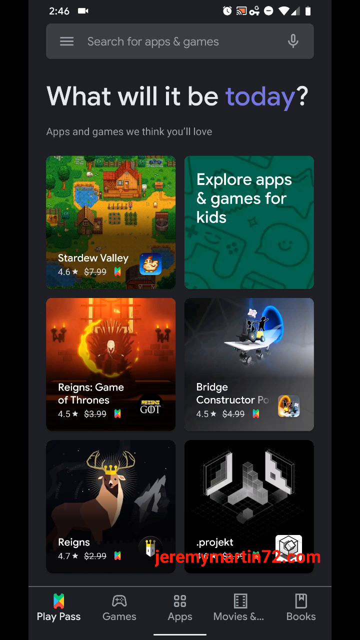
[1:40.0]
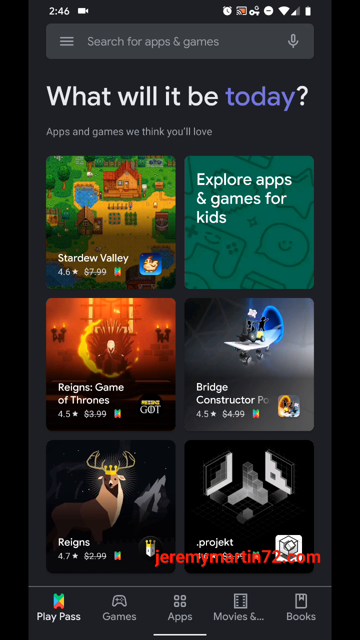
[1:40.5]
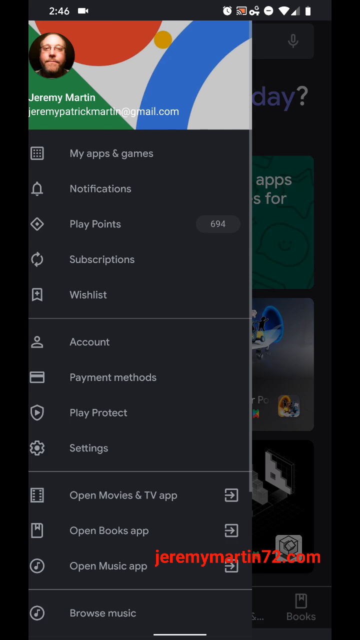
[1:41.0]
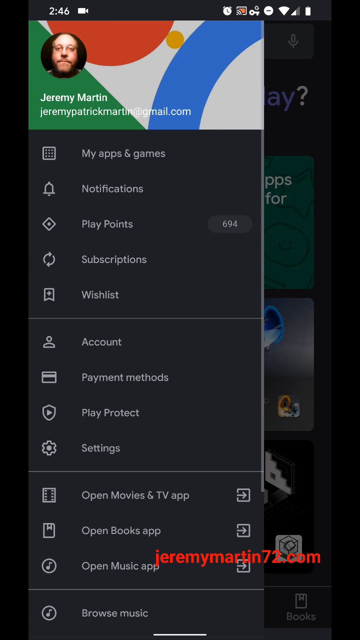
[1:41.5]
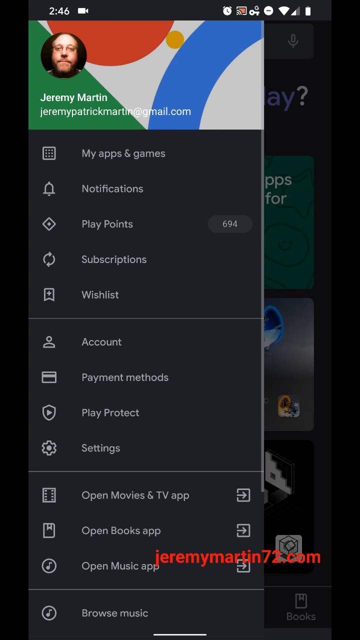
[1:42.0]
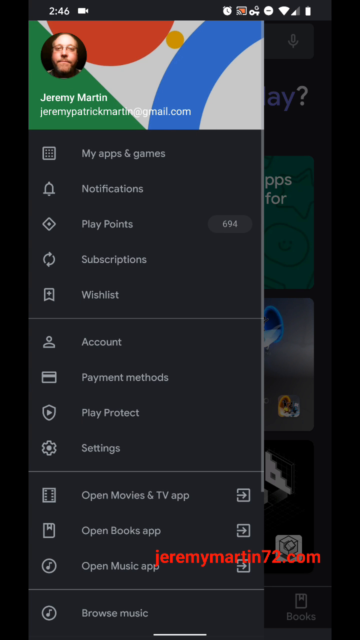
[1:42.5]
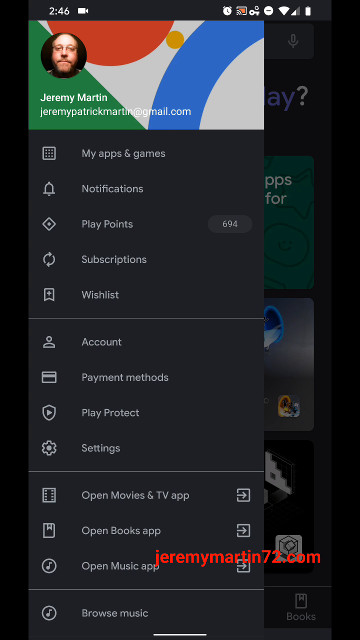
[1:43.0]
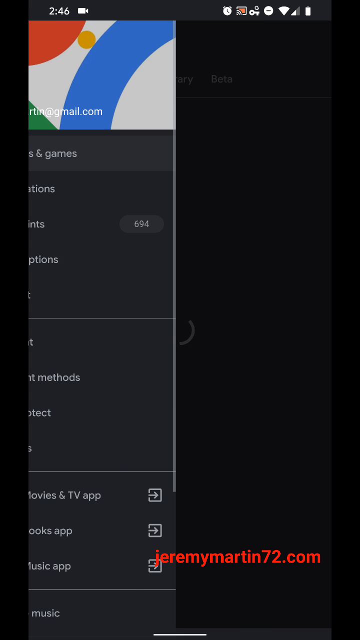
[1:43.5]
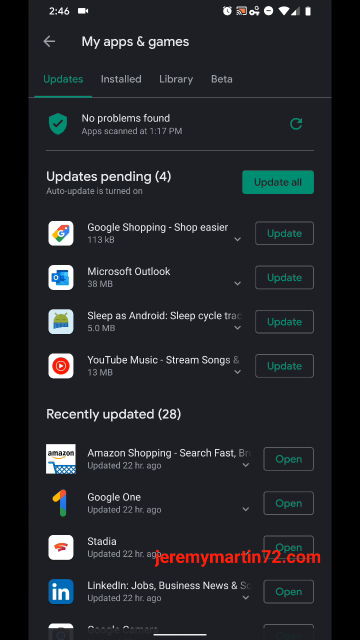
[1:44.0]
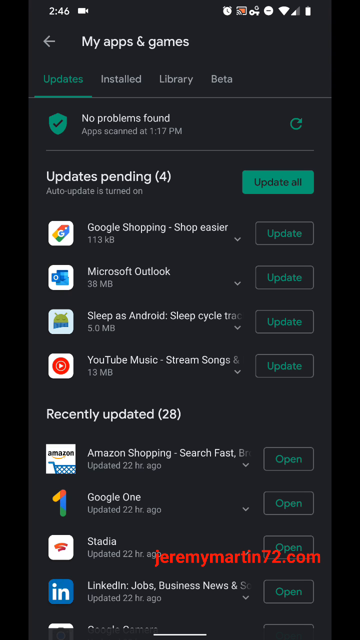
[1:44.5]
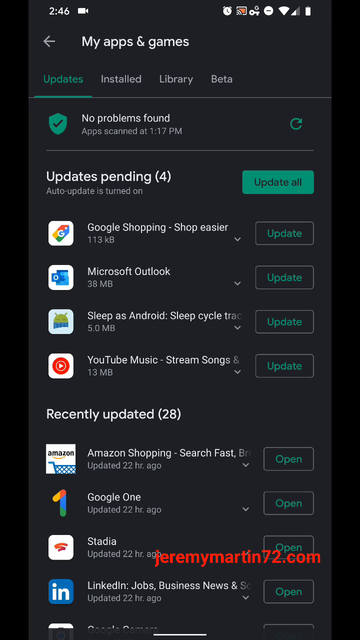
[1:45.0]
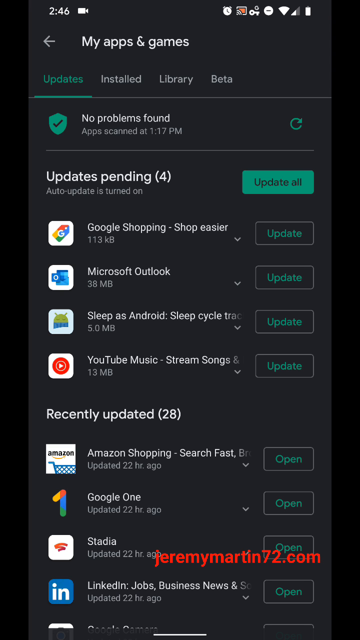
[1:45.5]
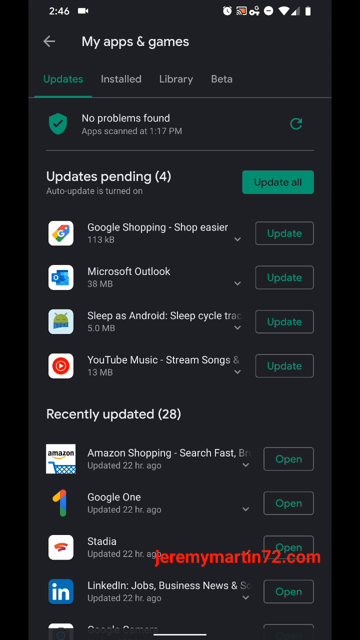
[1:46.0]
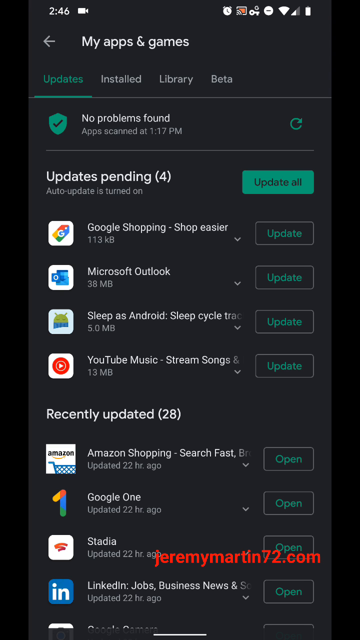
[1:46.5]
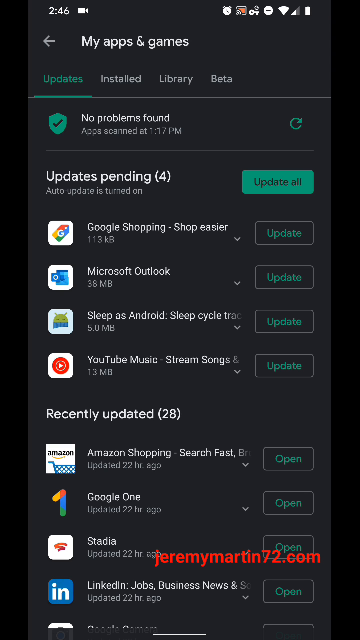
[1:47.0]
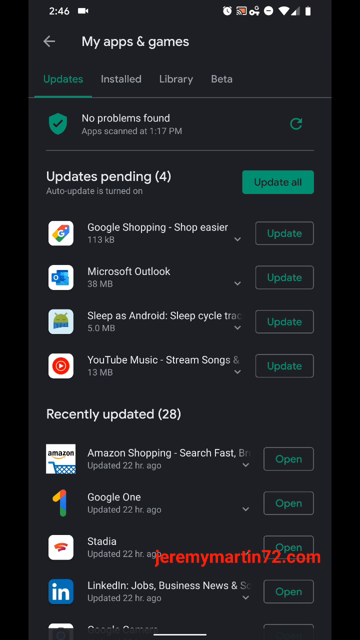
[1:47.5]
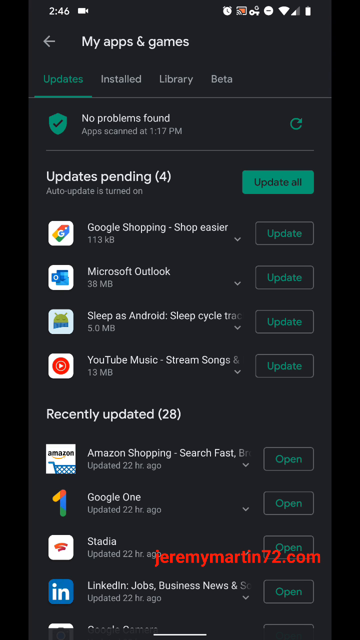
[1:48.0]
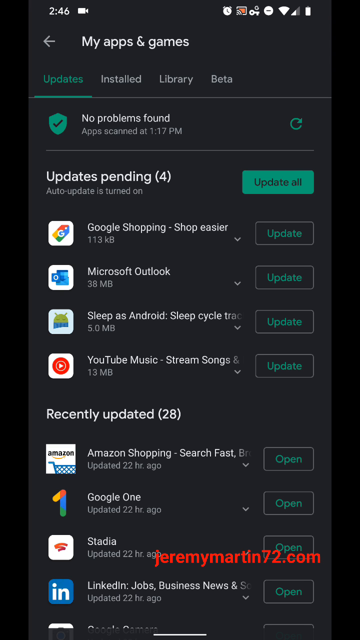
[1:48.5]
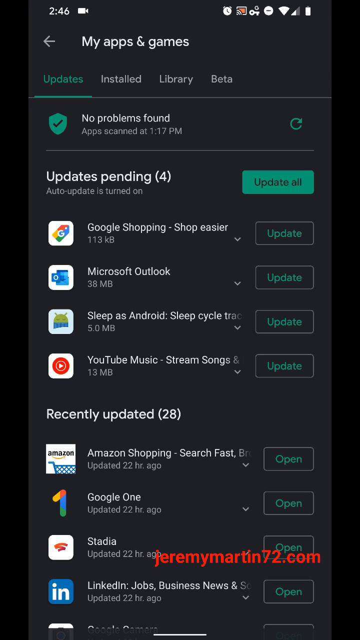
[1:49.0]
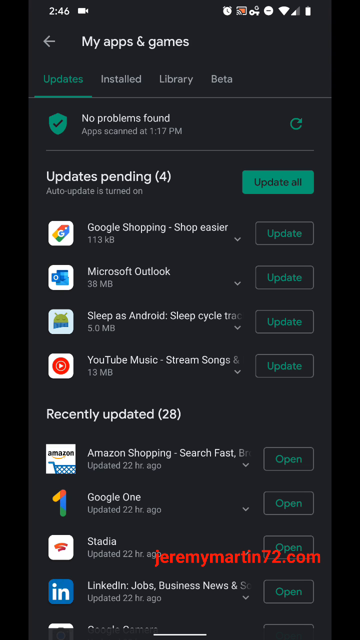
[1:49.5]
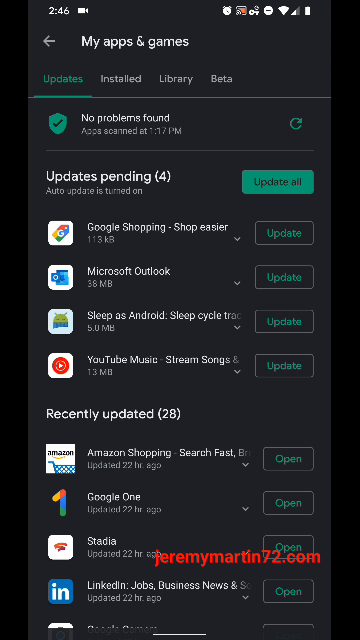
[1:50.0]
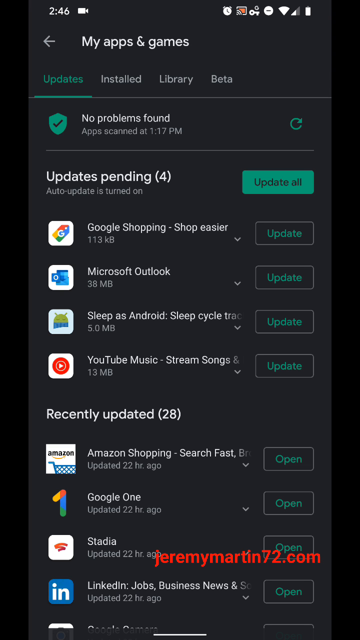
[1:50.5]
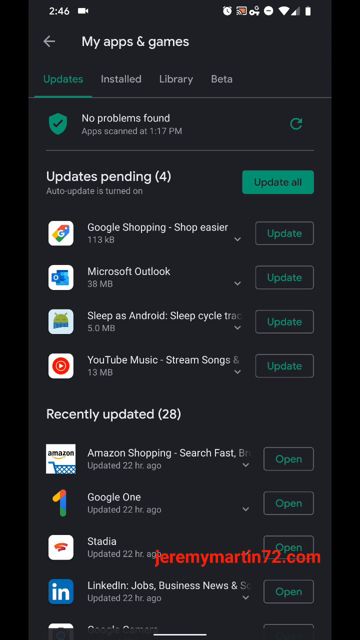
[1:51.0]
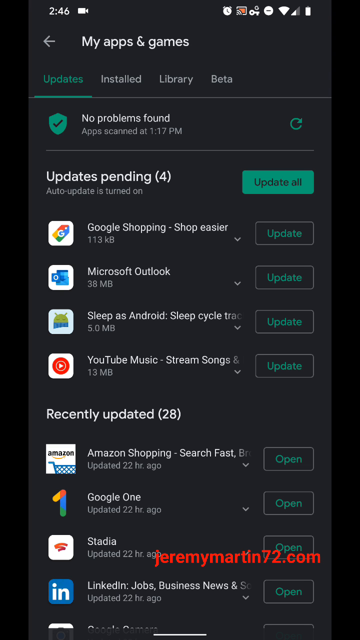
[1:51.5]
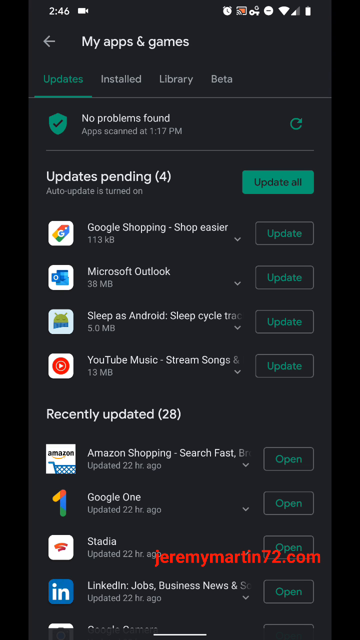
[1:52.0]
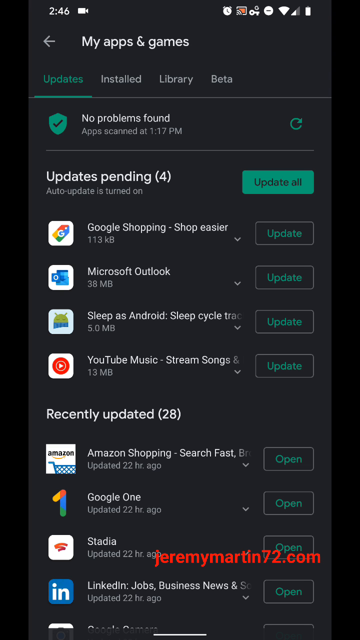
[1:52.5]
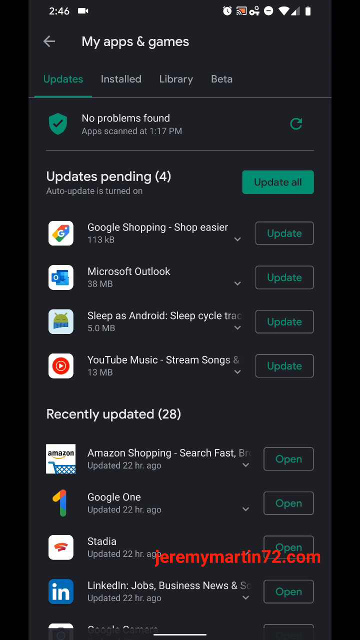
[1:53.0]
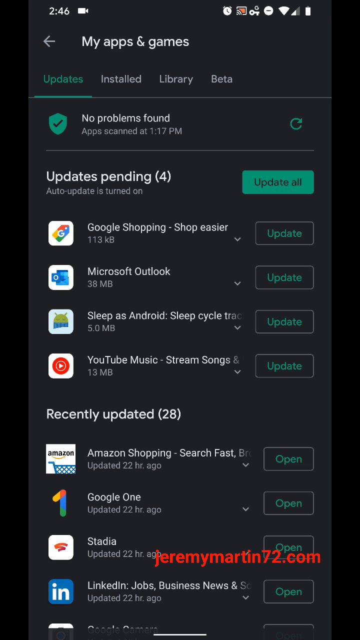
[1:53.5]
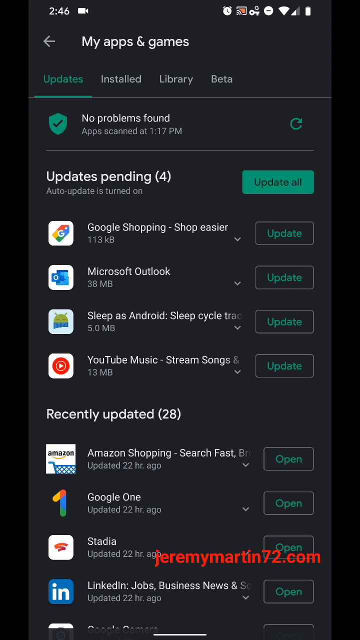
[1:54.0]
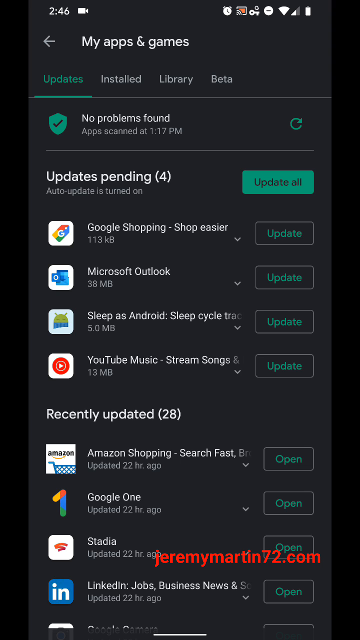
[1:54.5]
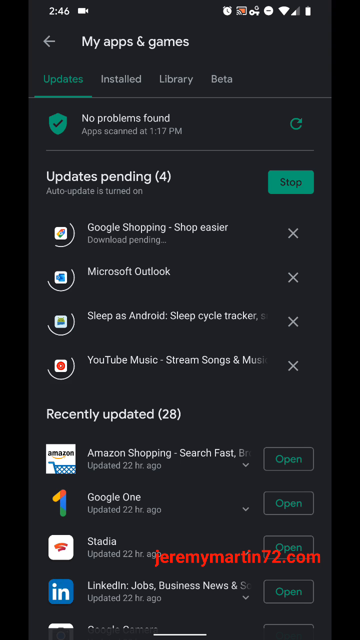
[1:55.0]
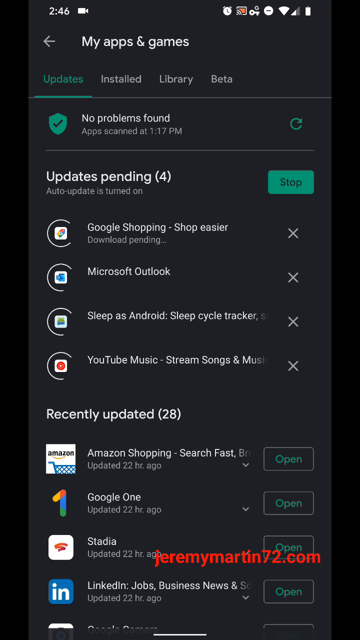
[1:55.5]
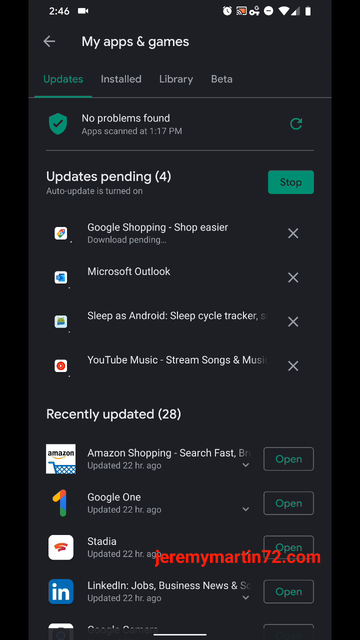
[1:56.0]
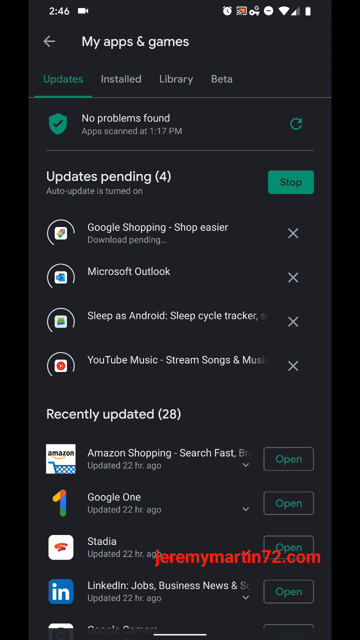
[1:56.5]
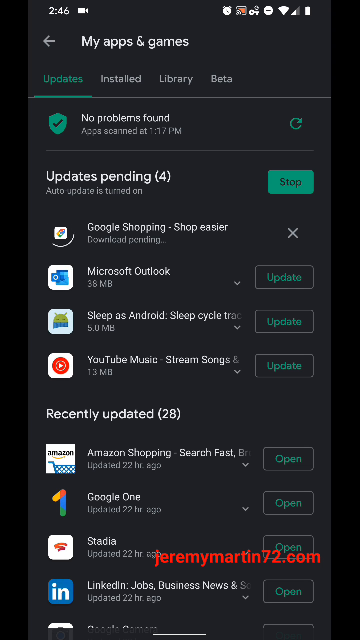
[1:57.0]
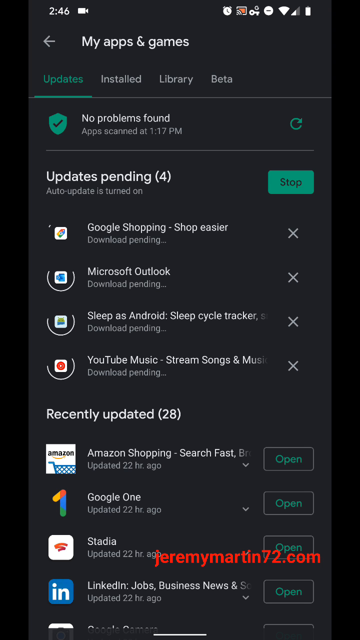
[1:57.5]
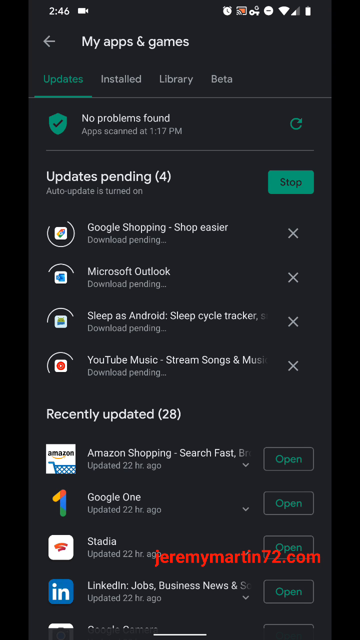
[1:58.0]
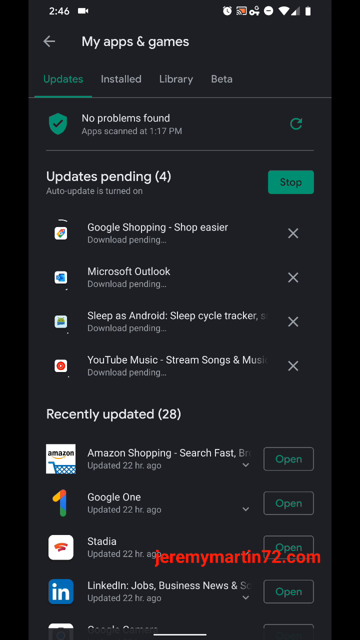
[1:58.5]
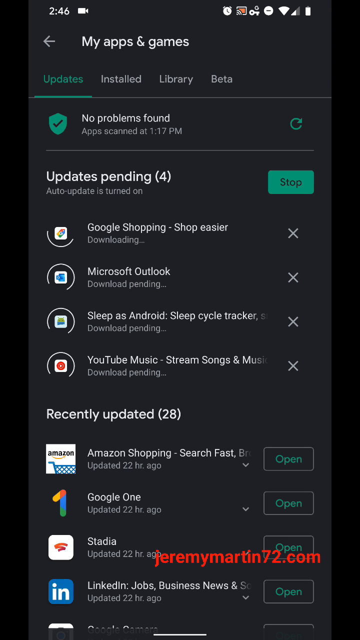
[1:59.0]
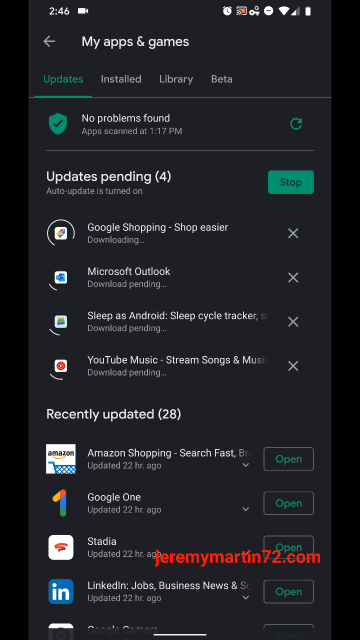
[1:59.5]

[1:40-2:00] The Google Play Store app is open. At the very top is the "Search for apps and games" search bar, with a microphone on the right side for voice search and a categories menu on the left side. Under that, white text reads "what will it be today", with "today" in purple, and below it "apps and games we think you'll love" with six recommended apps and games. At the bottom of the screen are several icons for navigating through the app. The user brings up the account section, which pops in from the left side and extends over to the far right, showing the user's profile picture and the name Jeremy Martin. The user then navigates to My apps and games.